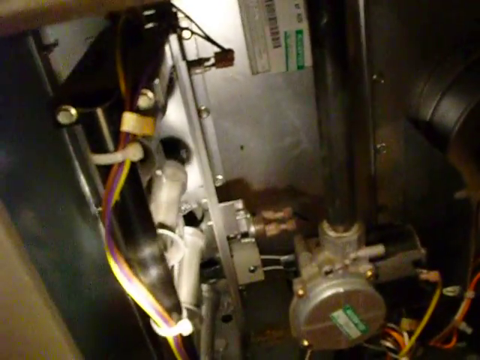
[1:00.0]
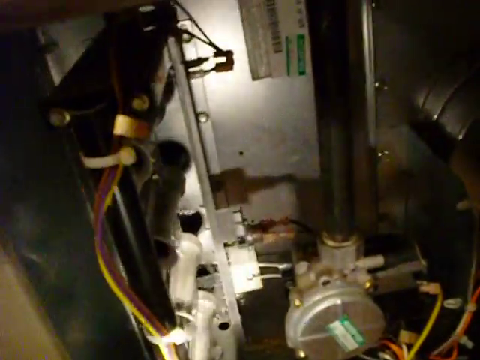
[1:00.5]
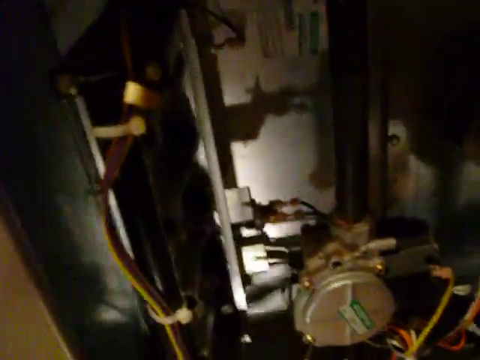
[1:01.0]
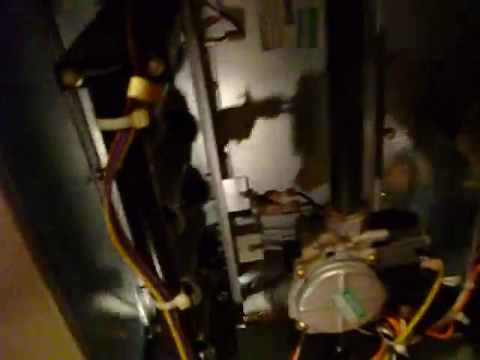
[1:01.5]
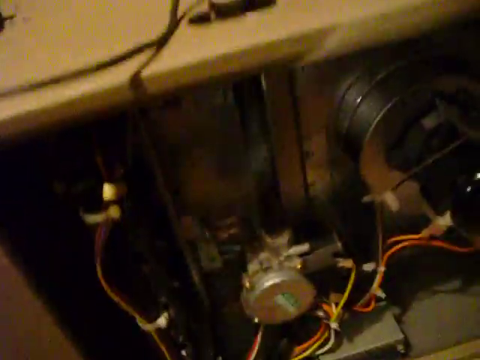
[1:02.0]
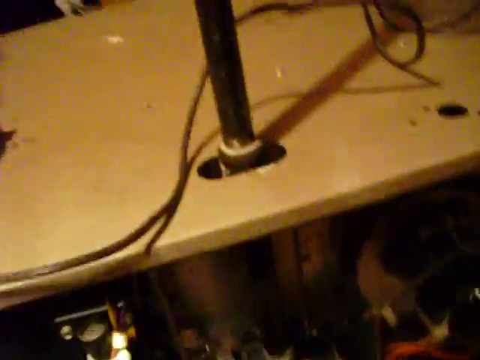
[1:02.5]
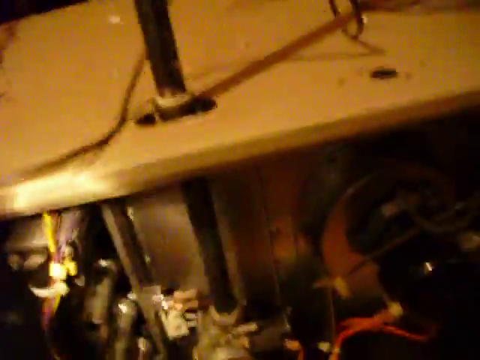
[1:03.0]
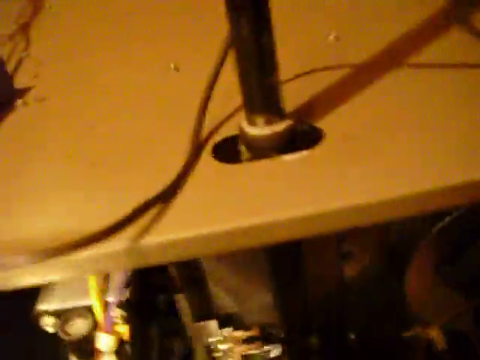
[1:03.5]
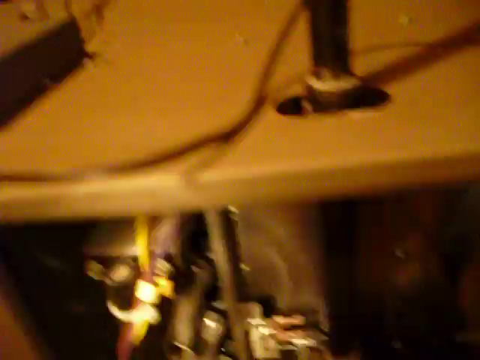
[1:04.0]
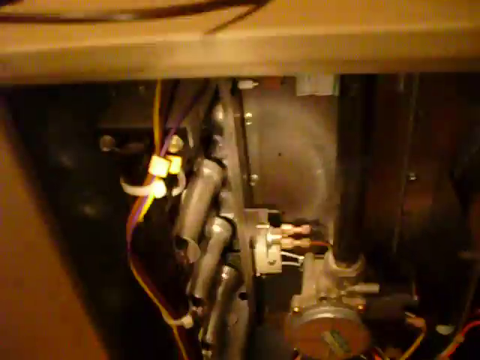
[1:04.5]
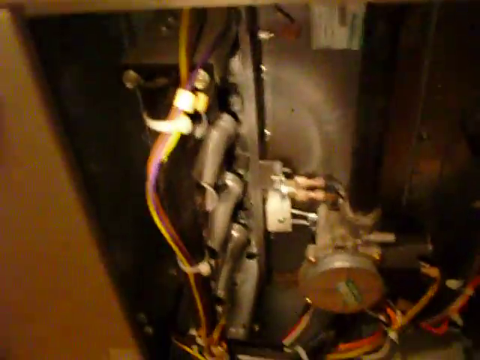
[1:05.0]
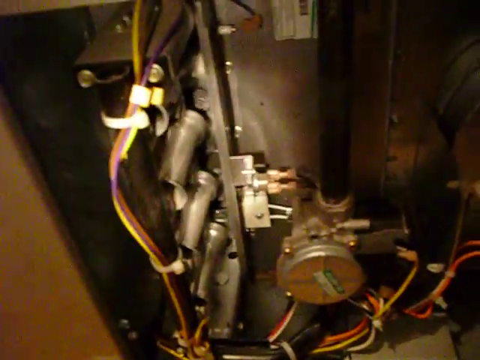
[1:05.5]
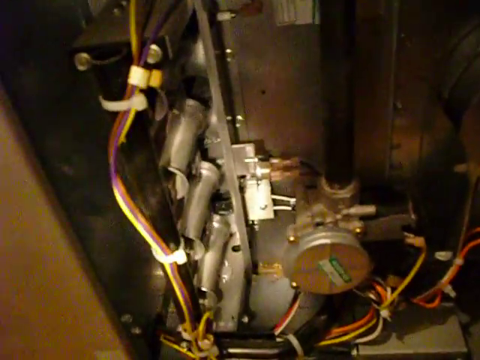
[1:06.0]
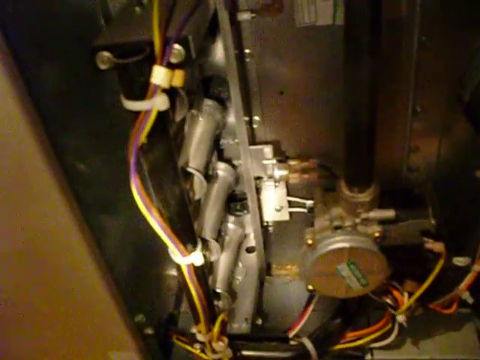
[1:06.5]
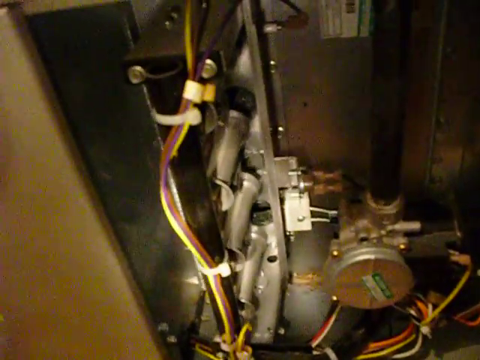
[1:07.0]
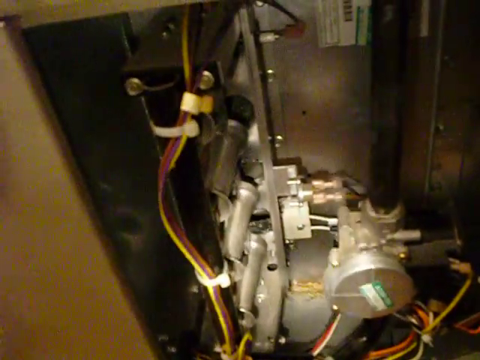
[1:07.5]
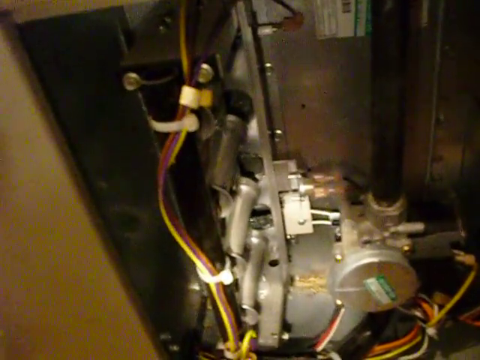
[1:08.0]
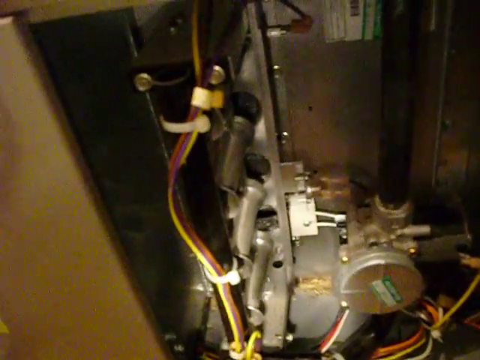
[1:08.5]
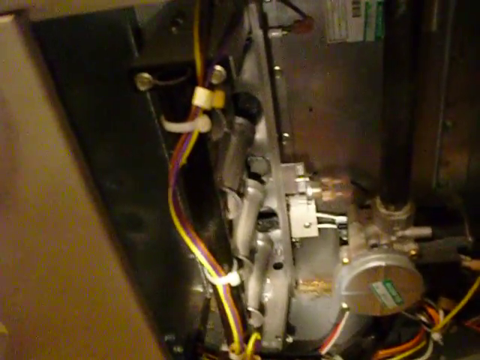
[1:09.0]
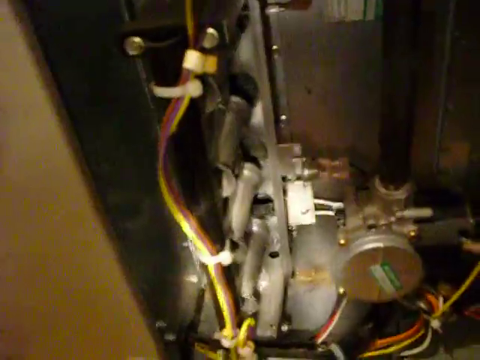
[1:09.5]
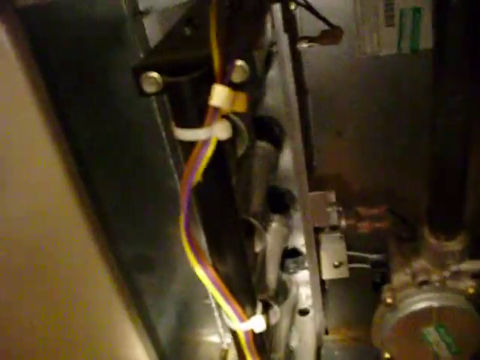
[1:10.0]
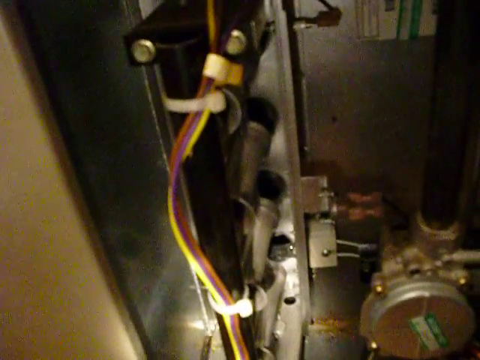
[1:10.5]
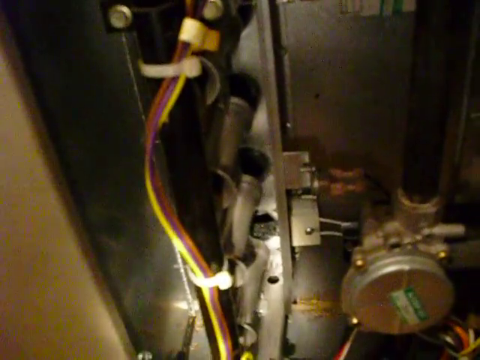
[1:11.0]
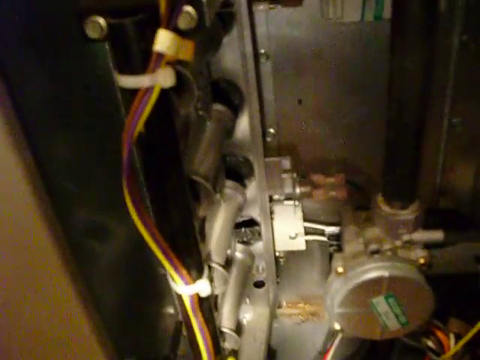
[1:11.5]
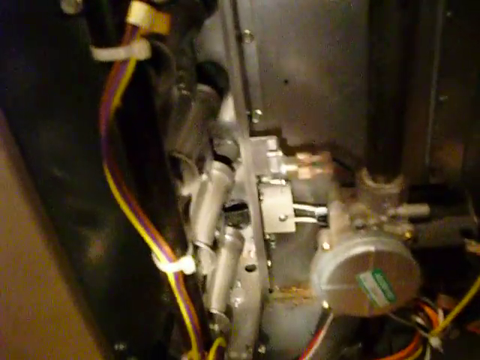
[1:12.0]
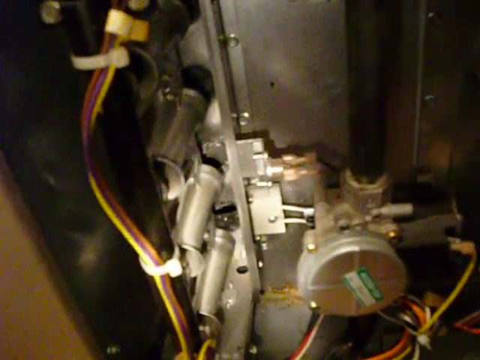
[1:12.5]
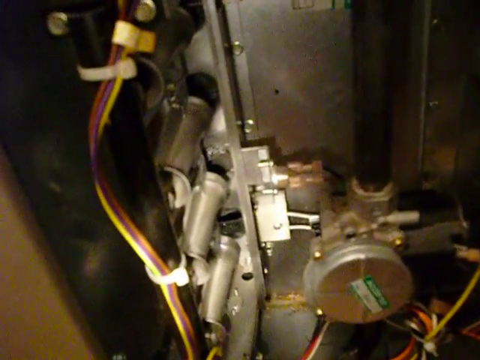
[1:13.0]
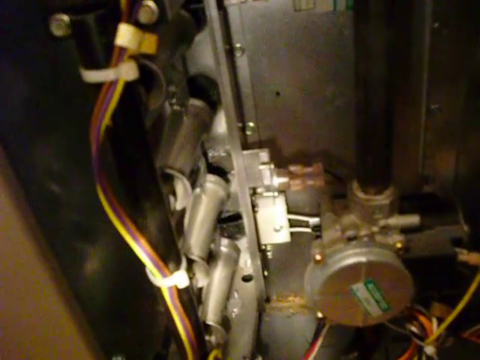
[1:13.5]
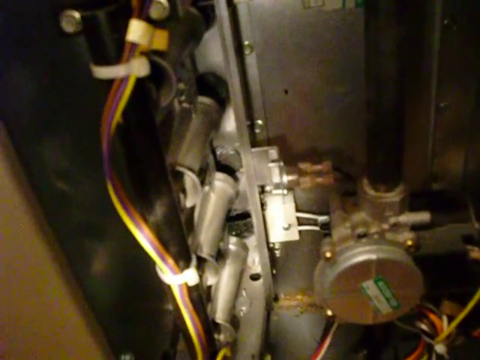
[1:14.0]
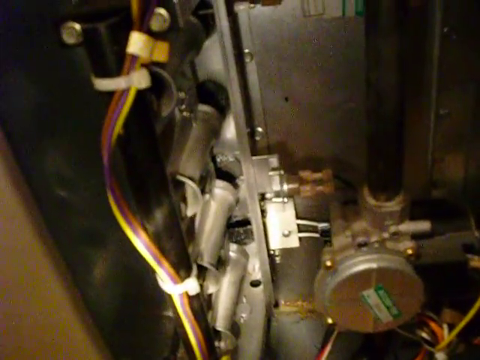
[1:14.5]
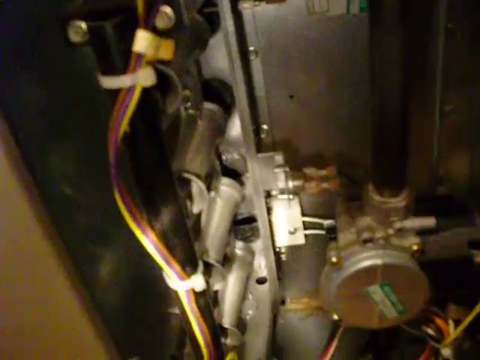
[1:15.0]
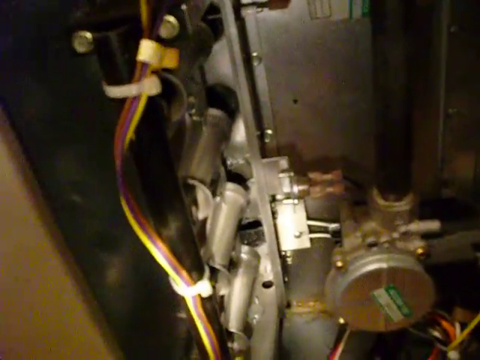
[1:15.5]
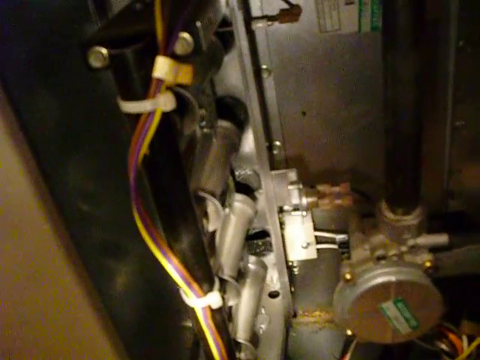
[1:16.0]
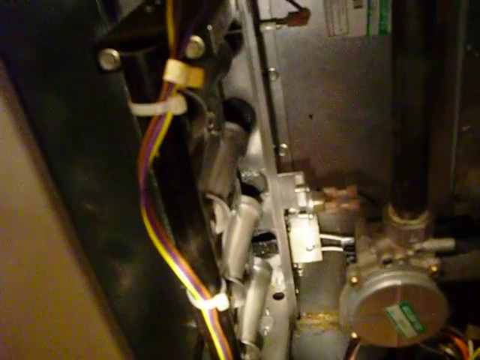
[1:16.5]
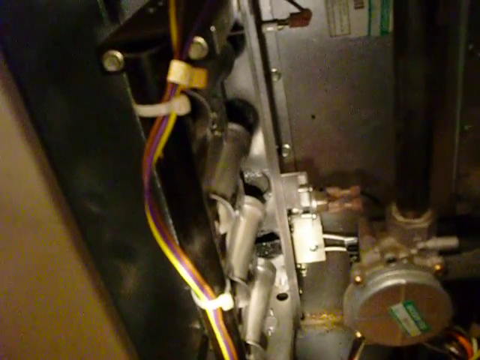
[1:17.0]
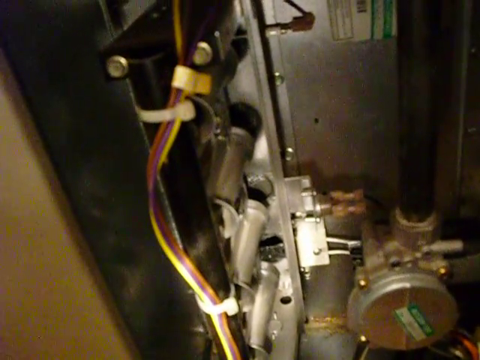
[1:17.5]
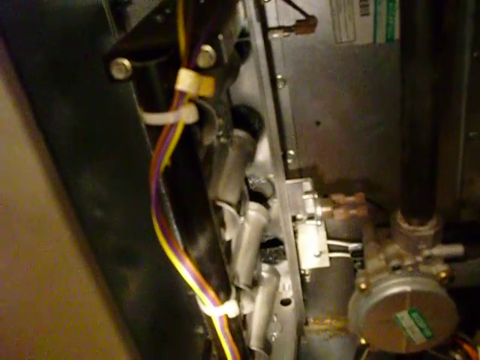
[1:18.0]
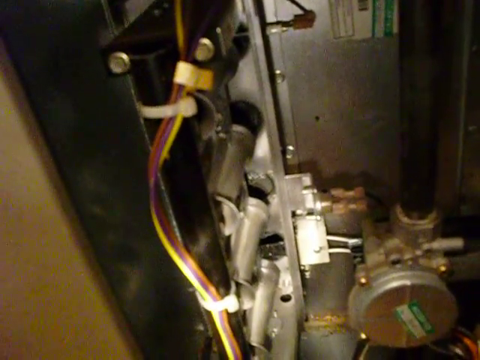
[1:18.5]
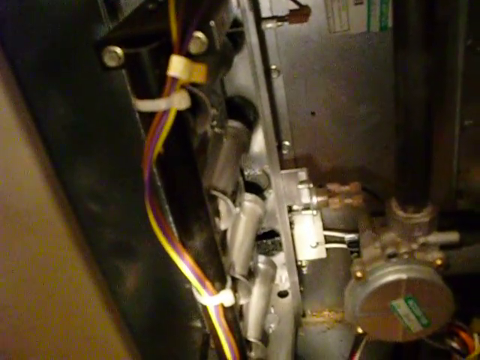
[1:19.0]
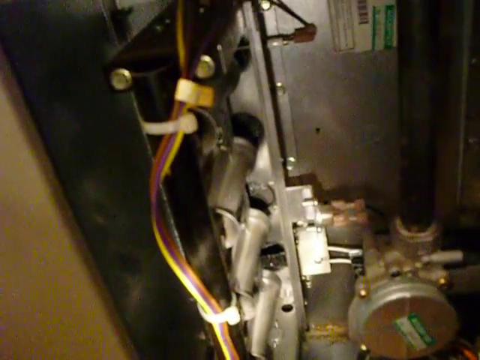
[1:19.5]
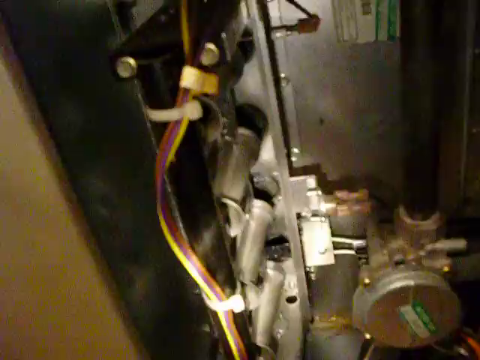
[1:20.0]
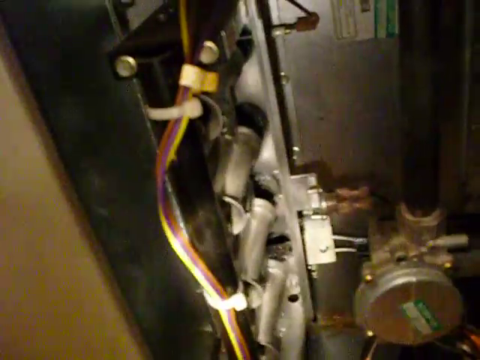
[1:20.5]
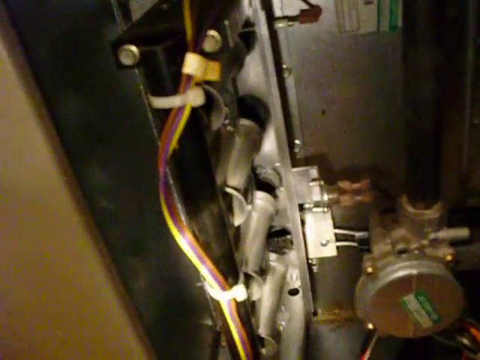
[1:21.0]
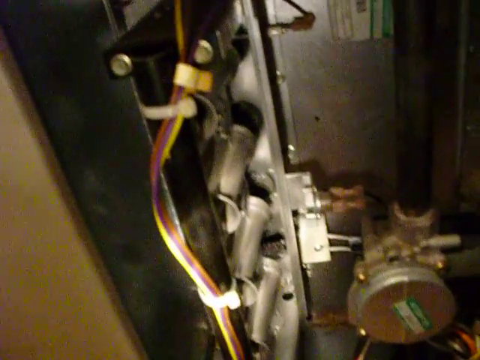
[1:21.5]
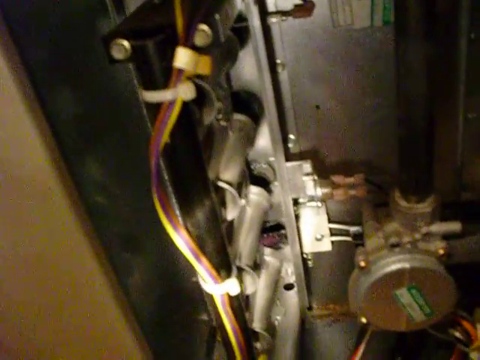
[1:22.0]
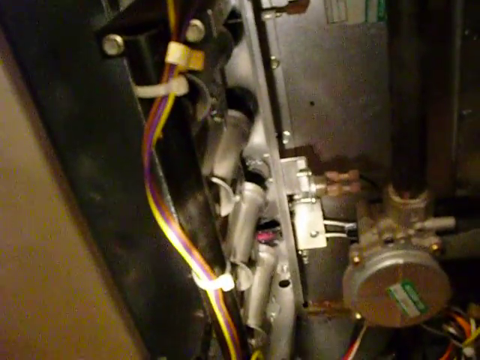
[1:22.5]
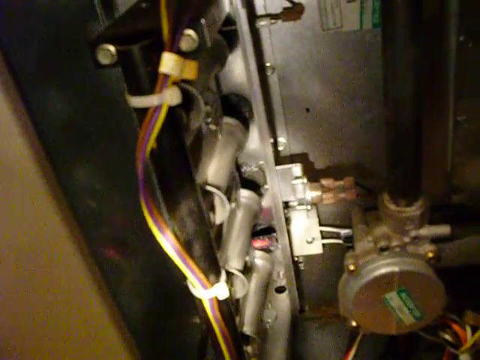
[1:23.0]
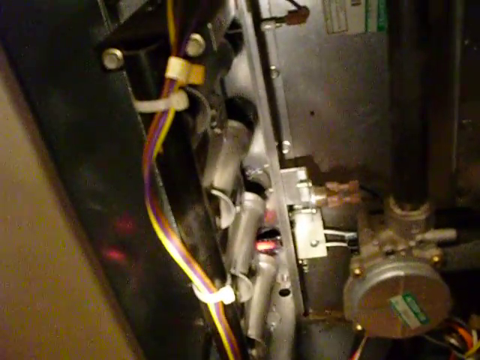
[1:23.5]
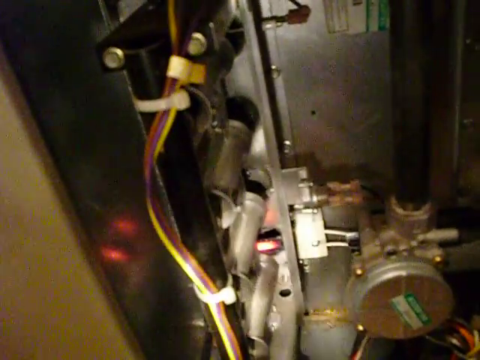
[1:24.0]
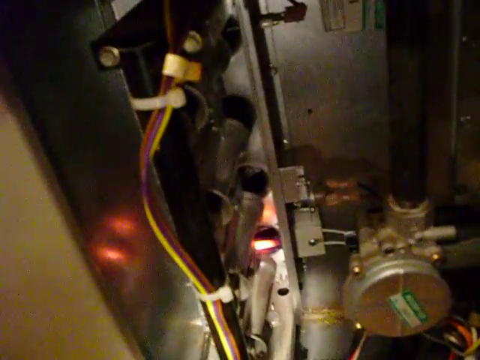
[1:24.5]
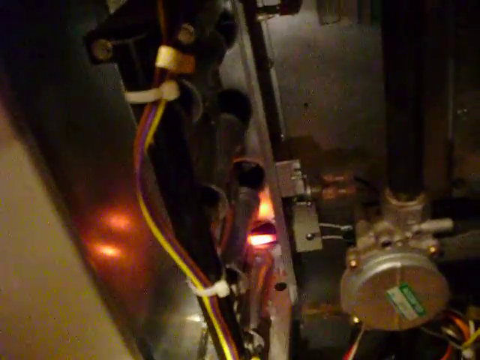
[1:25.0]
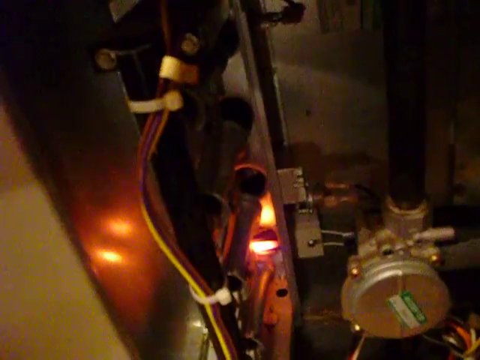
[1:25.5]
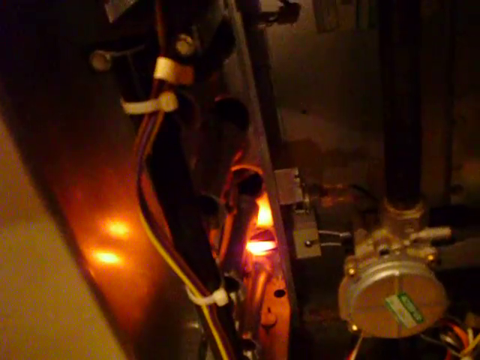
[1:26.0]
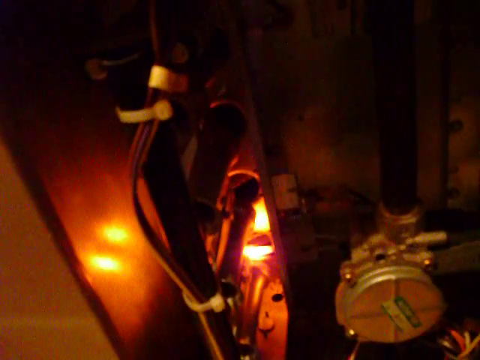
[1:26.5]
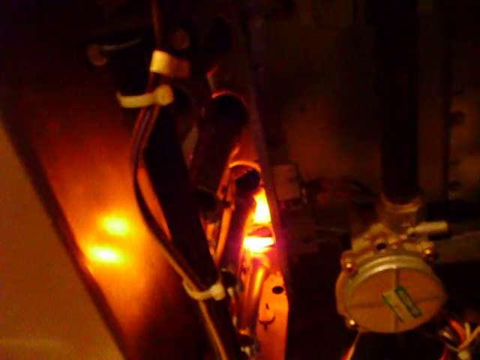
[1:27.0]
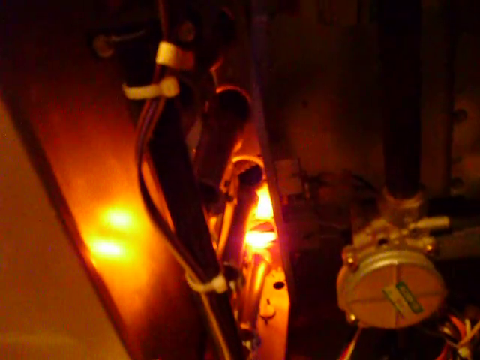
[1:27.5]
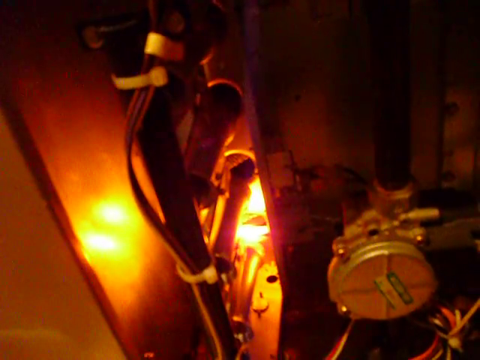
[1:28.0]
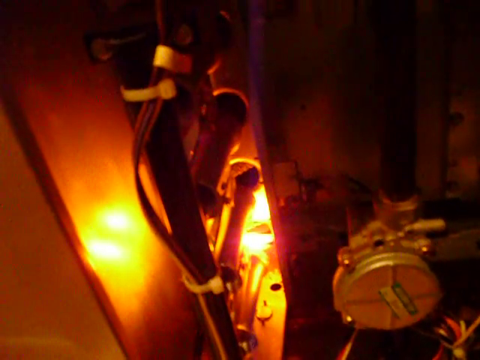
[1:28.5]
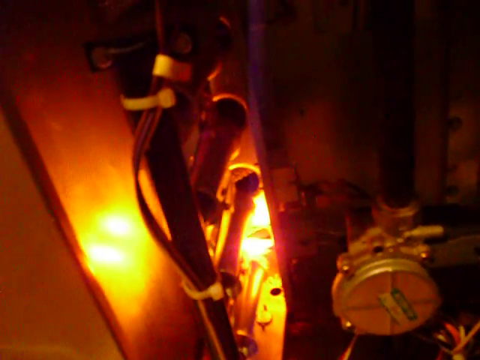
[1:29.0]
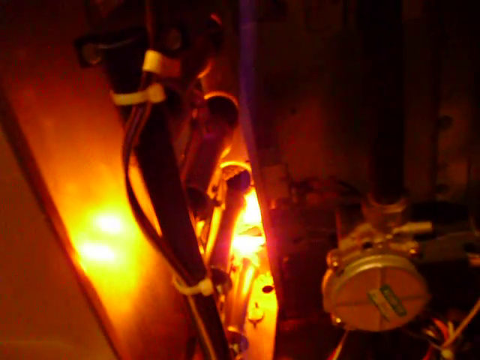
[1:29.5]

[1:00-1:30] The flashlight illuminates a detailed look into the opening of the box, a cramped space full of electrical circuits and devices with cables of different colors running off to different areas. After some moving around and showing of different parts, a bulb-like object starts to light up, glowing orange and then red and illuminating the interior of the metal box. The glow starts slowly and builds up, and its reflection can be seen on the side metal panel of the box. The flashlight is directed at this glowing part.